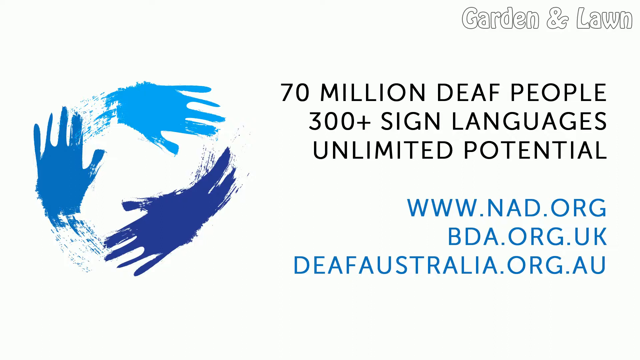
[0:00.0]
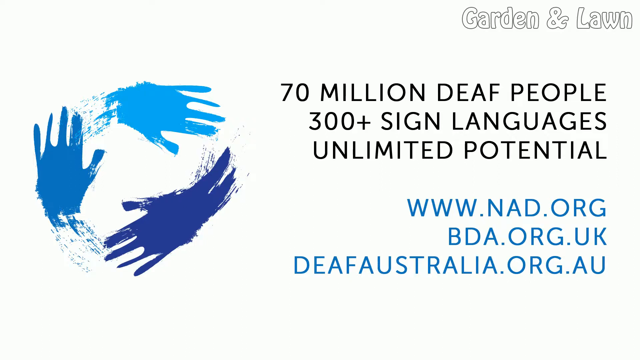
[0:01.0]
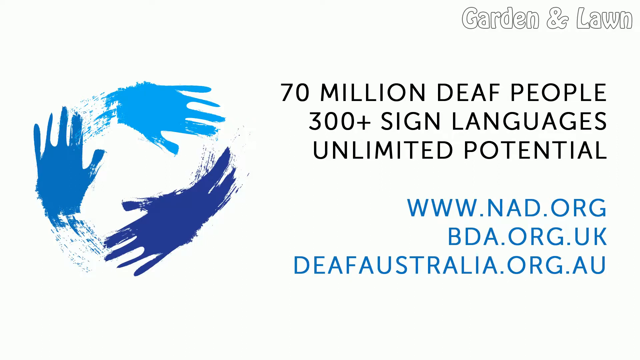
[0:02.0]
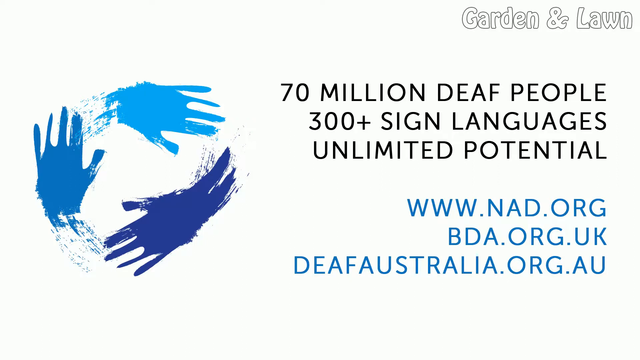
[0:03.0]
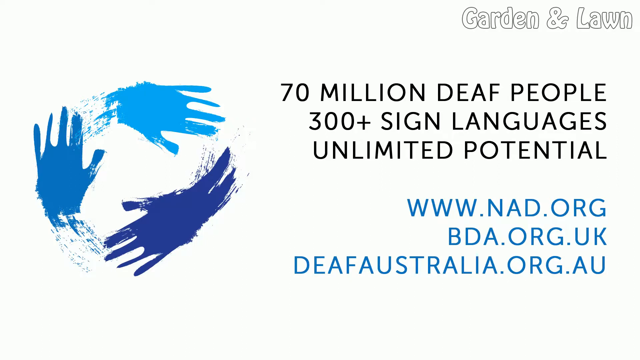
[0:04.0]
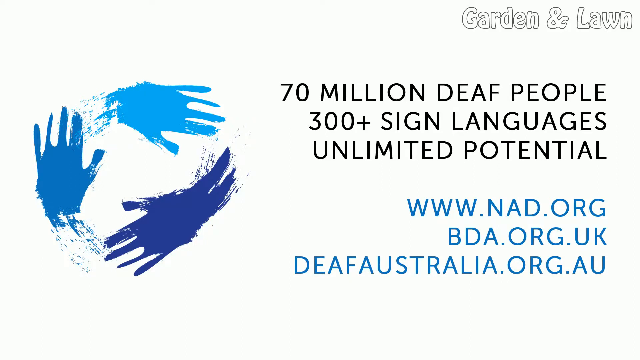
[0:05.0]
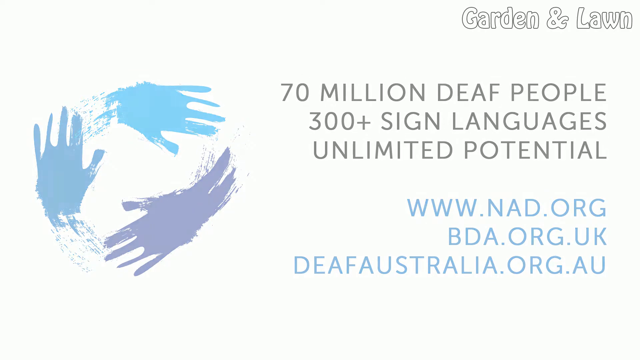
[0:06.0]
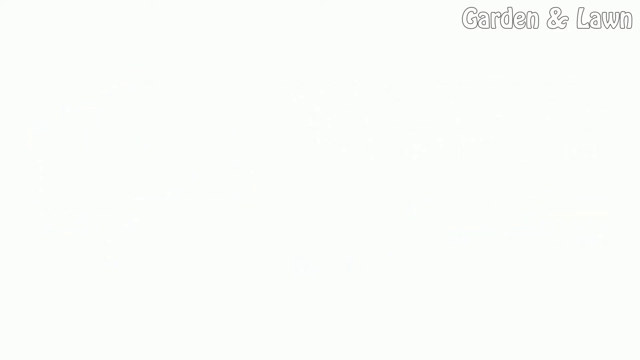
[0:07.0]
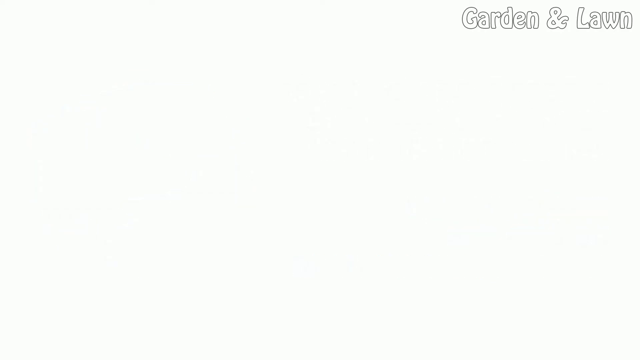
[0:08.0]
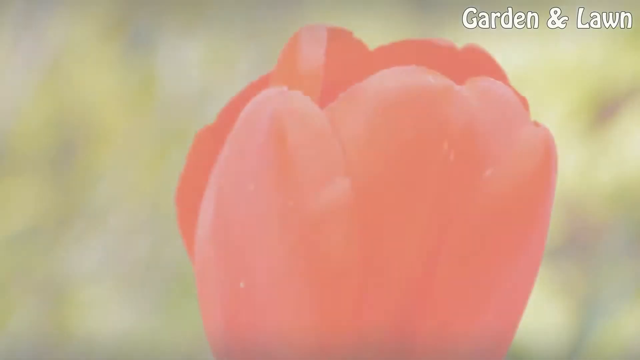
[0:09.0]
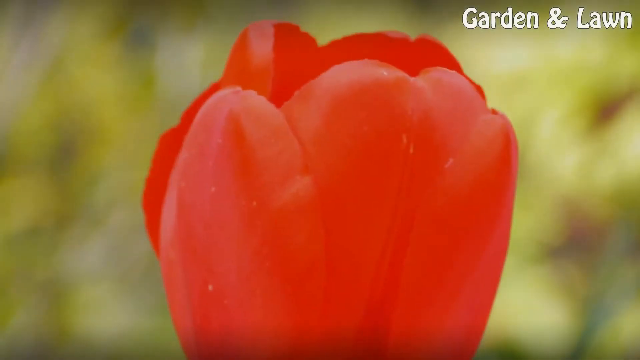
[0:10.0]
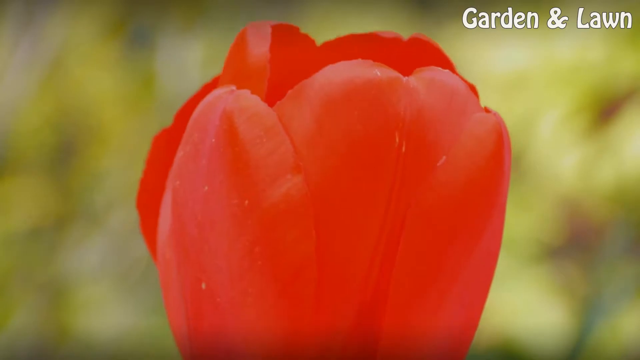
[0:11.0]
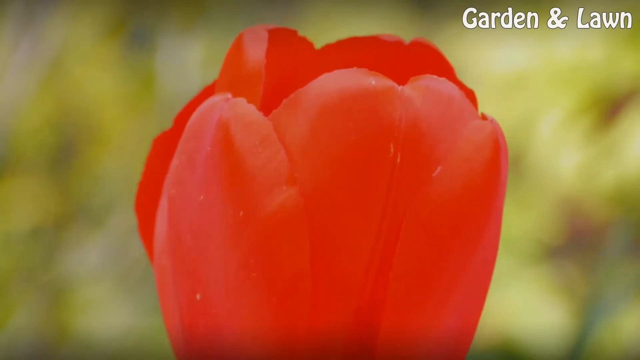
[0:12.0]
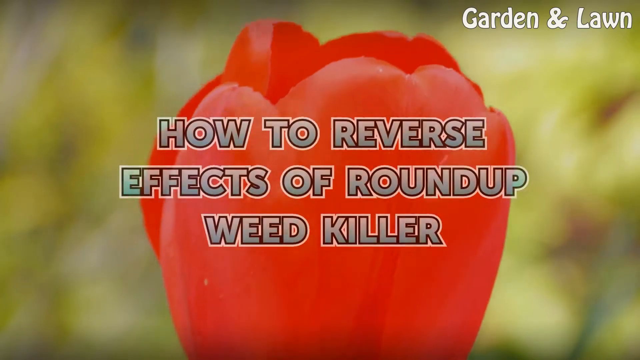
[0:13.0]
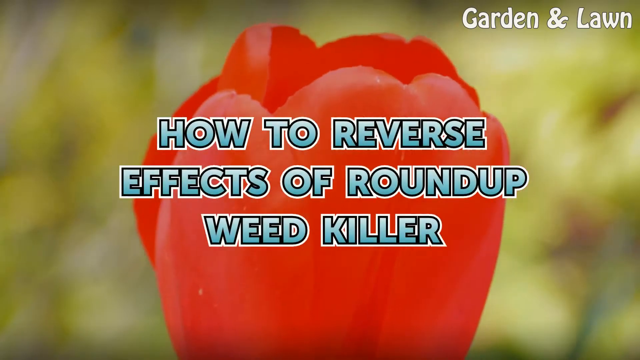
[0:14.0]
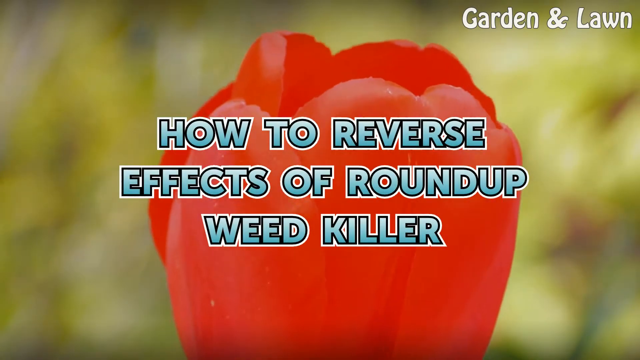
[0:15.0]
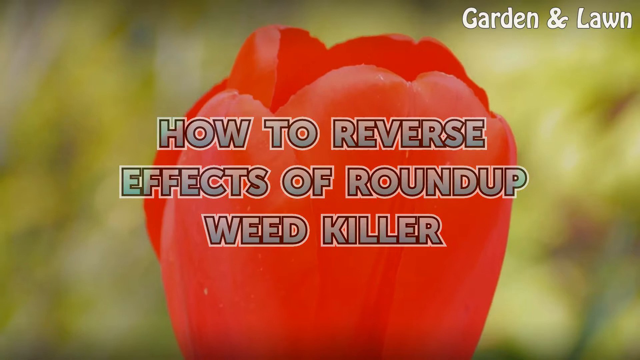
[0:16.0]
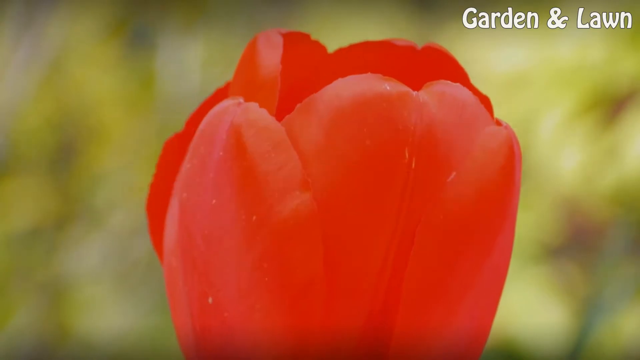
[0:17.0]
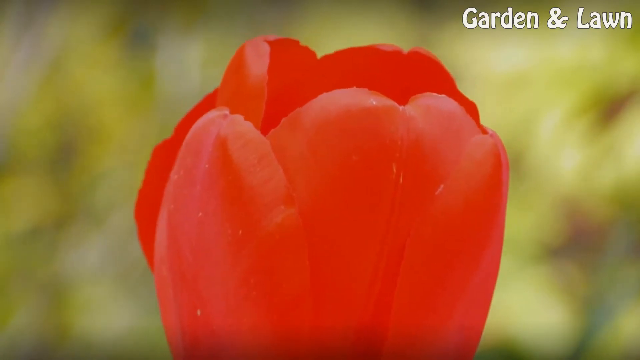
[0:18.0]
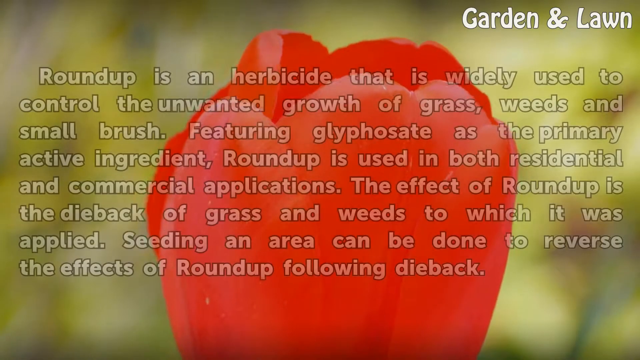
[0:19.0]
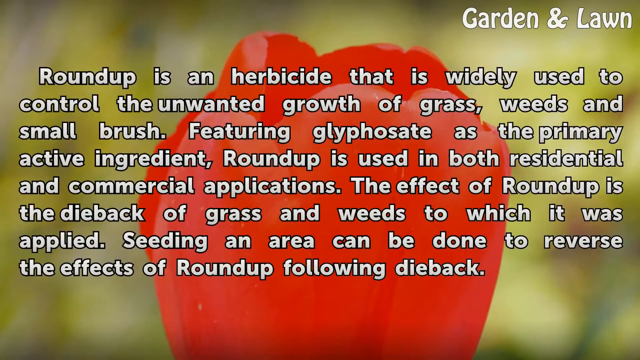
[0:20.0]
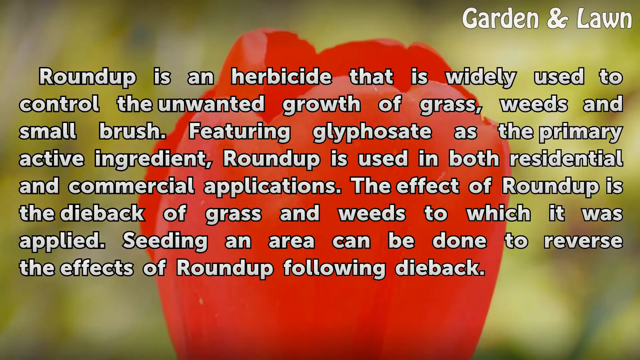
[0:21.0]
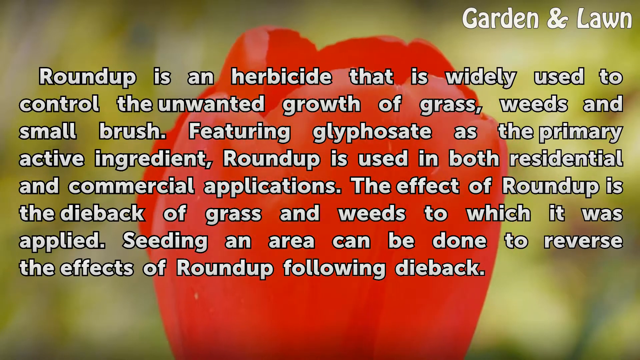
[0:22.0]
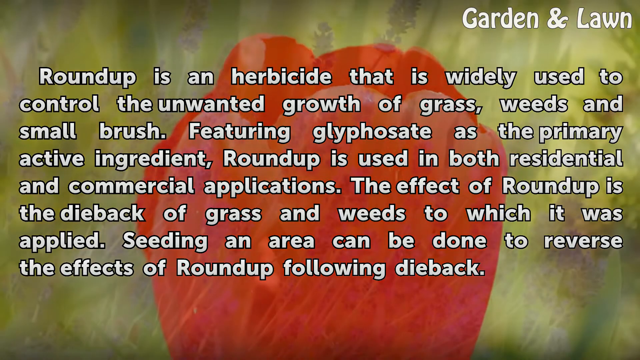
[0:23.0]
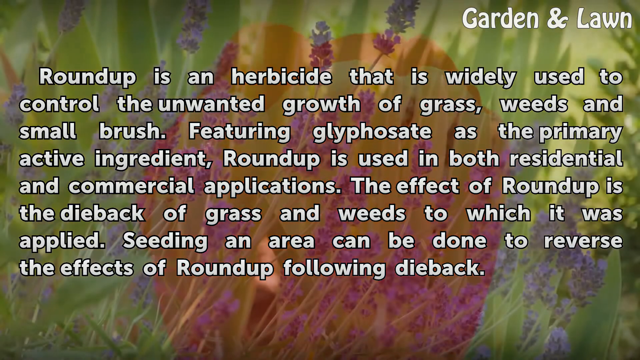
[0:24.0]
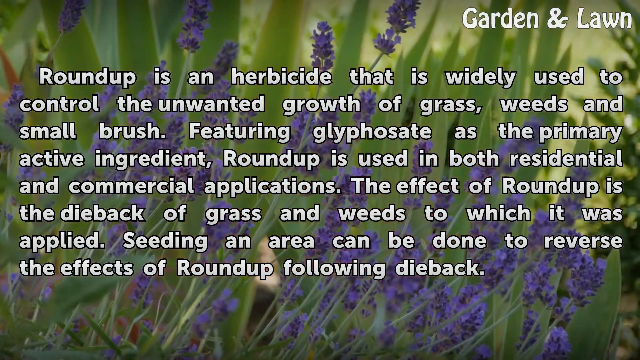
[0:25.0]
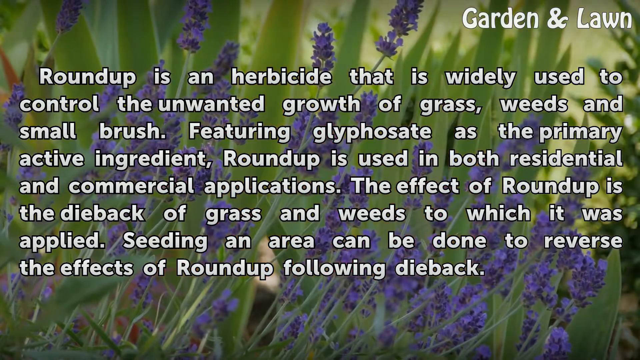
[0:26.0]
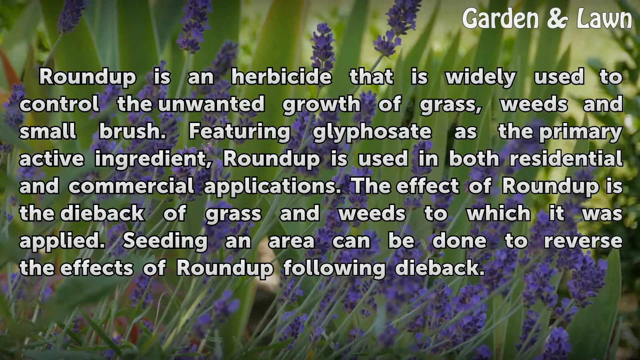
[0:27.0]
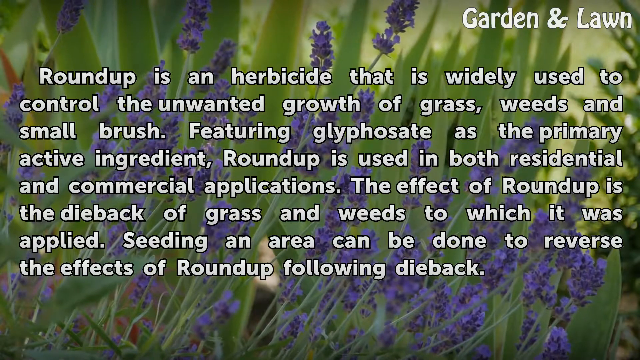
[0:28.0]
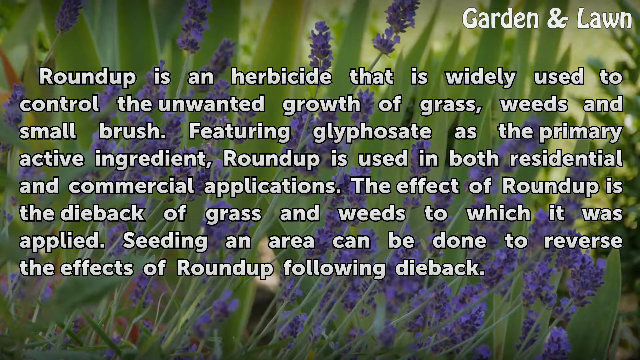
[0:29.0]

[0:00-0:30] The video is titled how to reverse the effect of Roundup weed killer and is a gardening and lawn care tutorial about seeding an area of lawn or garden that has been treated with the Roundup herbicide. It starts with a title card showing a logo of four hands joining together, with text reading "70 million deaf people, 300 plus sign language, unlimited" and website addresses for NAD, BDA and Deaf Australia. After this introduction, a close-up shot of a single red tulip appears with text overlaid explaining that Roundup is a widely used herbicide containing the active ingredient glyphosate, that it causes the dieback of grass and weeds, and that seeding an area can reverse the effect. Next comes a close-up of a pink azalea flower with an on-screen list of things you need: a rake, trash bag, shovel, small tiller, grass seed, straw, fertilizer 24-4 and water. The video then moves through several flower scenes, including a light purple flower and a vast field of yellow tulips, while giving step-by-step instructions for preparing the soil and reseeding. The first step is to leave the herbicide-treated ground undisturbed for seven days so it becomes neutralized in the soil. Next, the dead grass and weeds are to be gathered with a rake, bagged and disposed of properly. The soil is then prepared for seeding by using a shovel or small tiller to turn and break it up. Instructions follow for spreading grass seed, advising a seed suited to geographical location, shade tolerance and personal preference, spreading the seed evenly and gently covering it with soil using a rake, applying a balanced starter fertilizer, and watering the newly planted seeds regularly for the first seven days until they germinate and begin to grow.